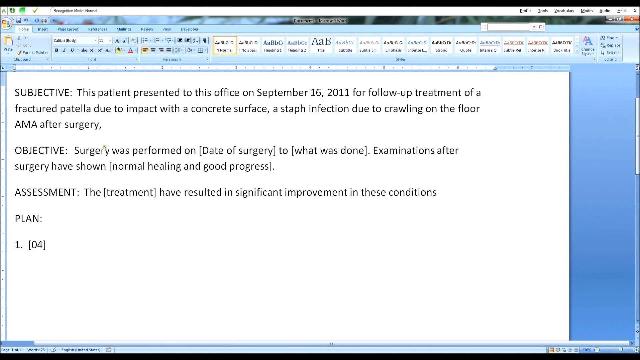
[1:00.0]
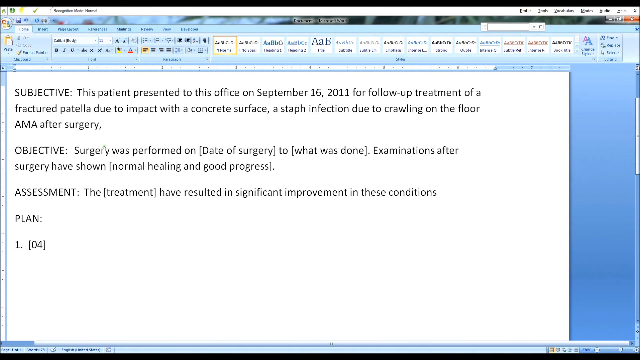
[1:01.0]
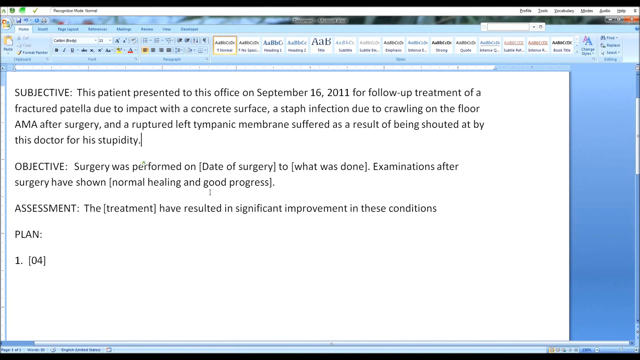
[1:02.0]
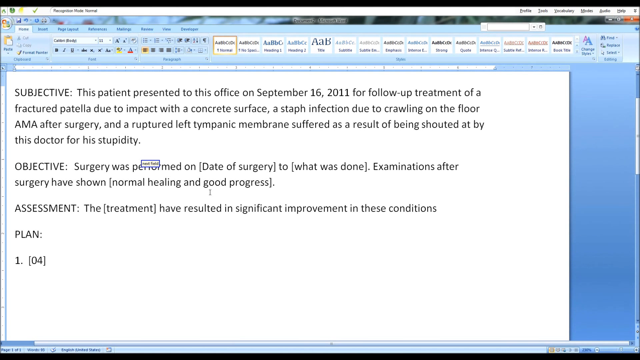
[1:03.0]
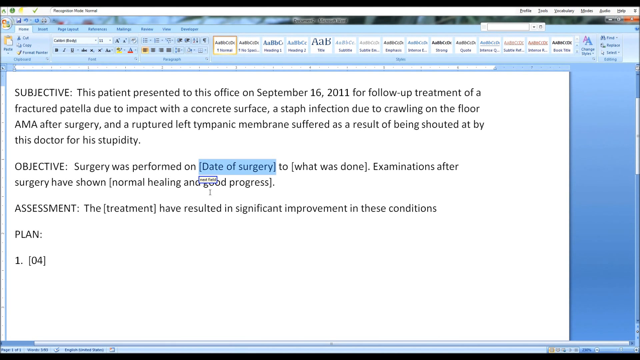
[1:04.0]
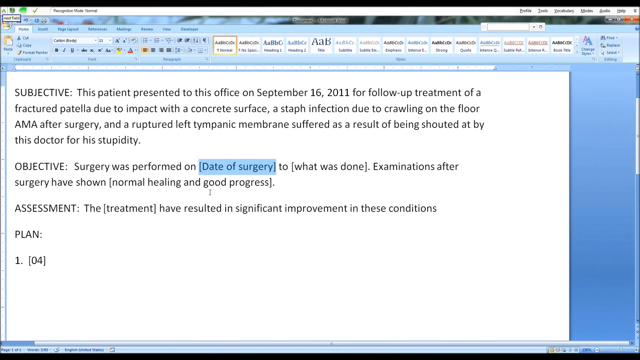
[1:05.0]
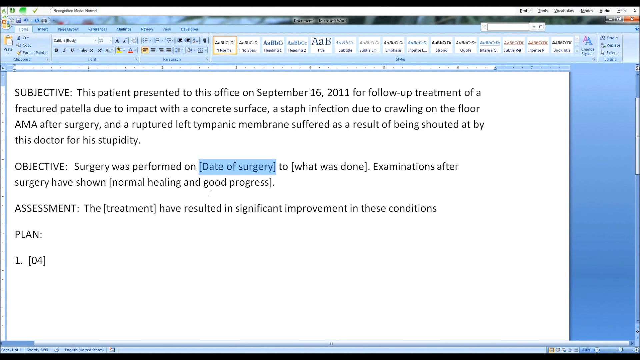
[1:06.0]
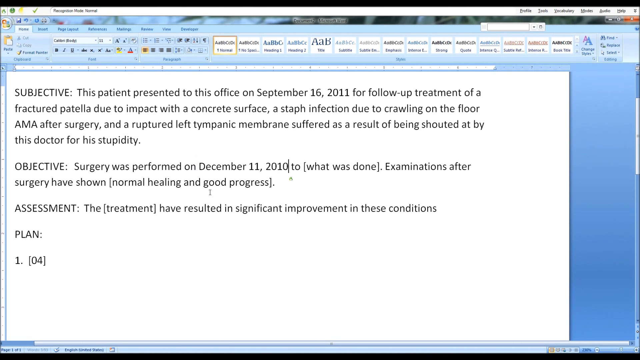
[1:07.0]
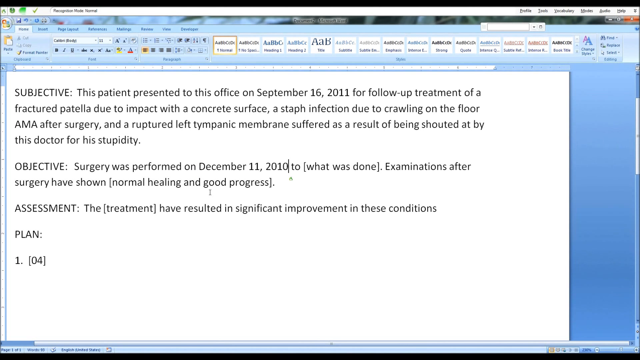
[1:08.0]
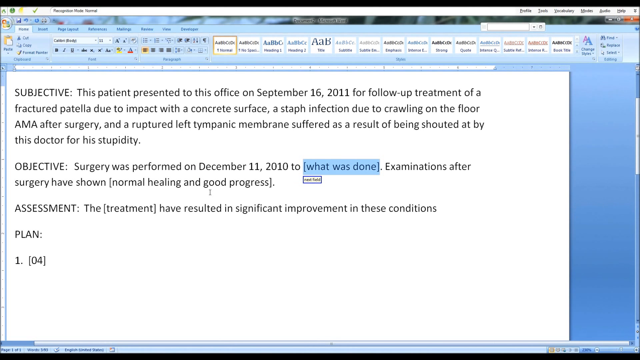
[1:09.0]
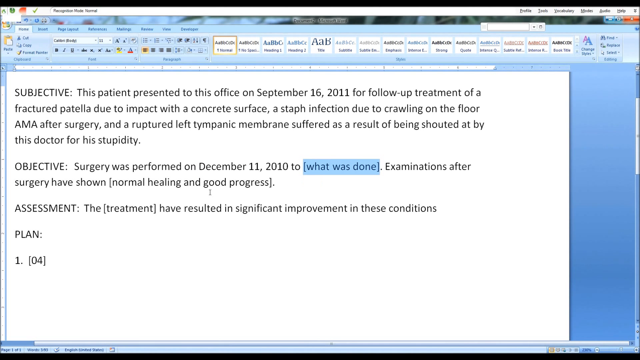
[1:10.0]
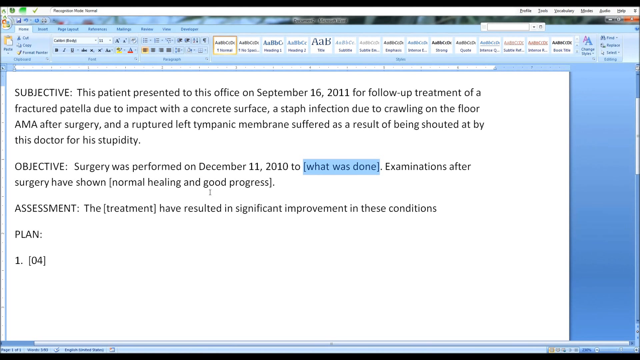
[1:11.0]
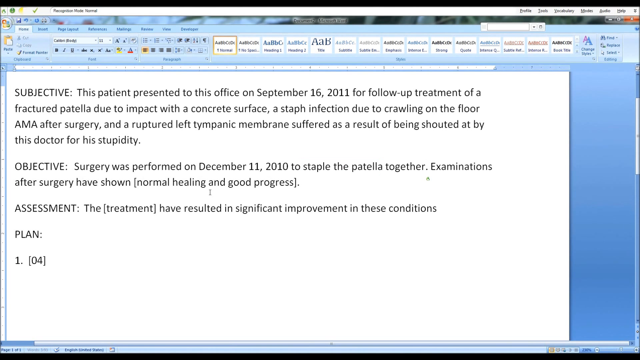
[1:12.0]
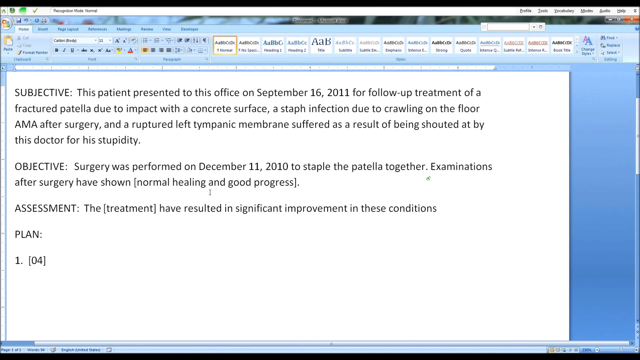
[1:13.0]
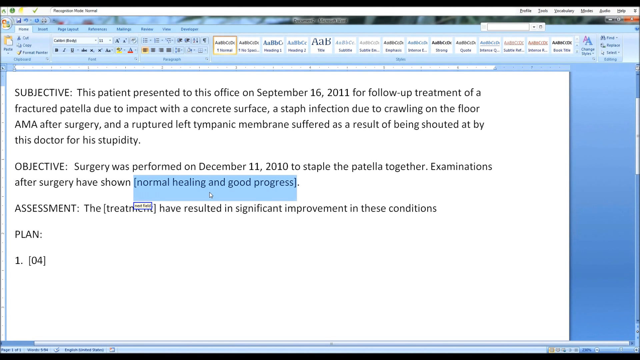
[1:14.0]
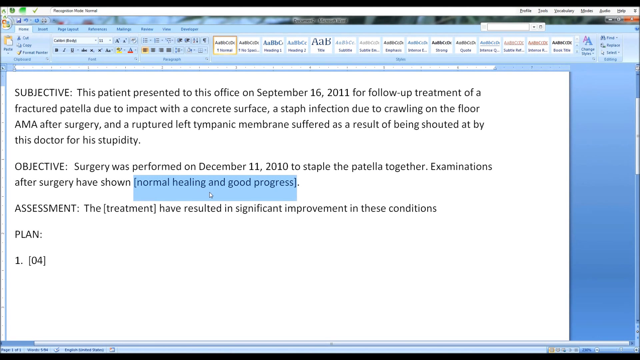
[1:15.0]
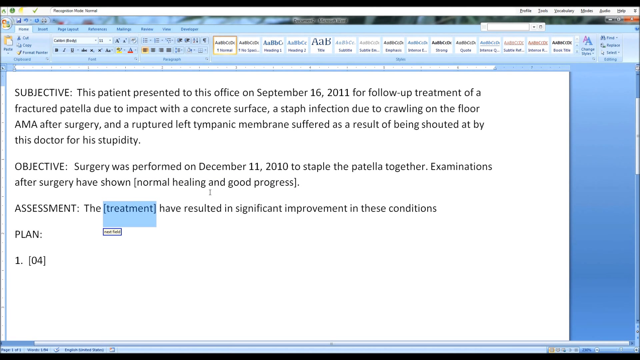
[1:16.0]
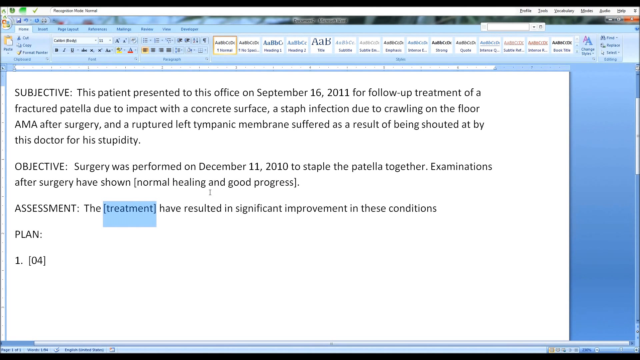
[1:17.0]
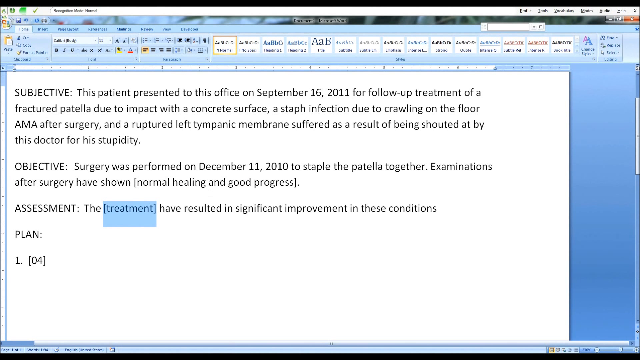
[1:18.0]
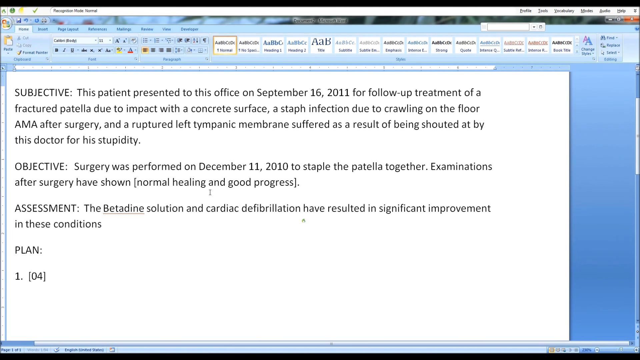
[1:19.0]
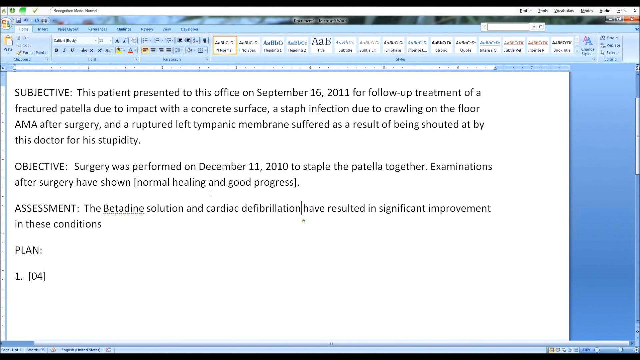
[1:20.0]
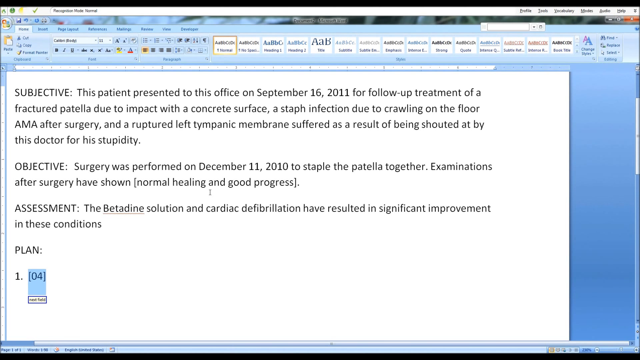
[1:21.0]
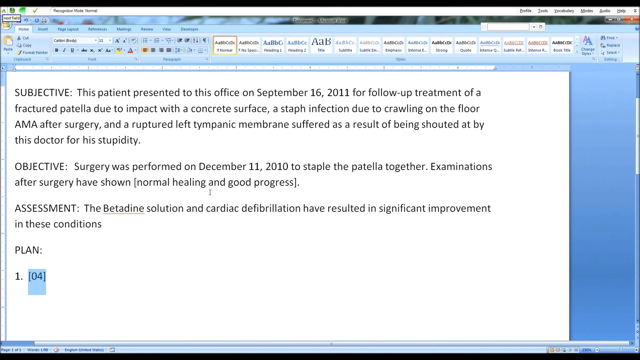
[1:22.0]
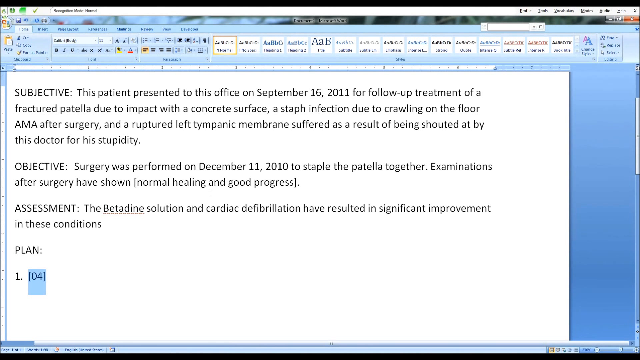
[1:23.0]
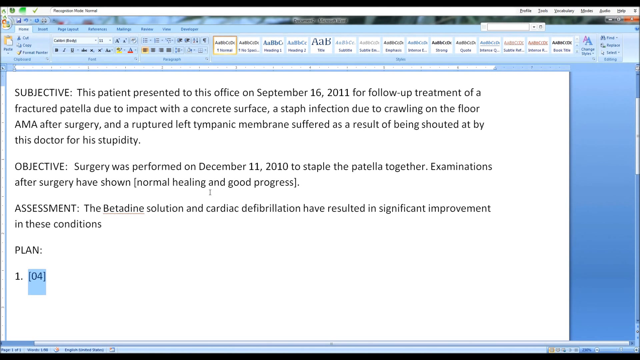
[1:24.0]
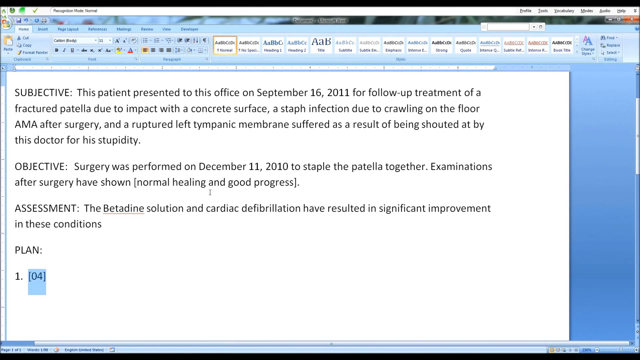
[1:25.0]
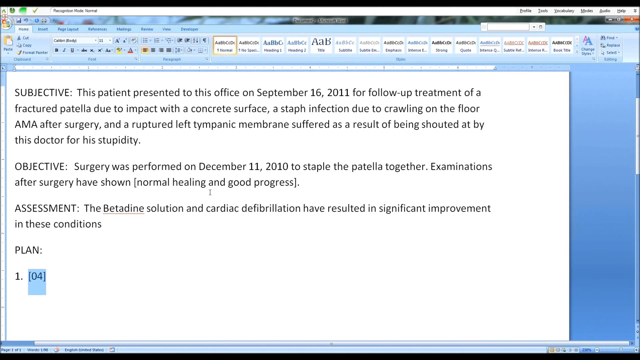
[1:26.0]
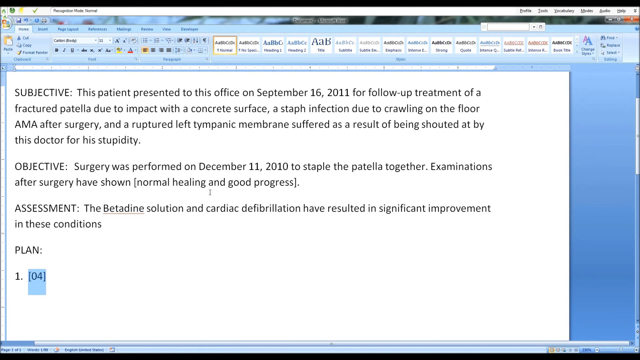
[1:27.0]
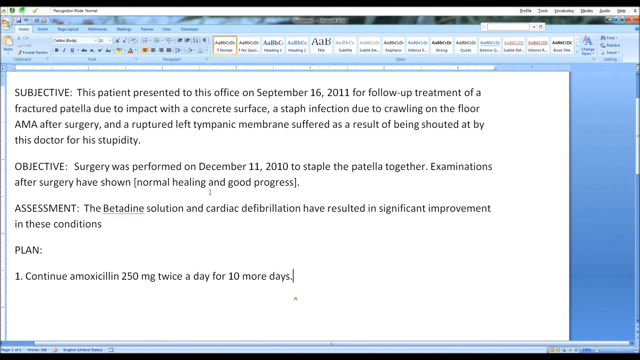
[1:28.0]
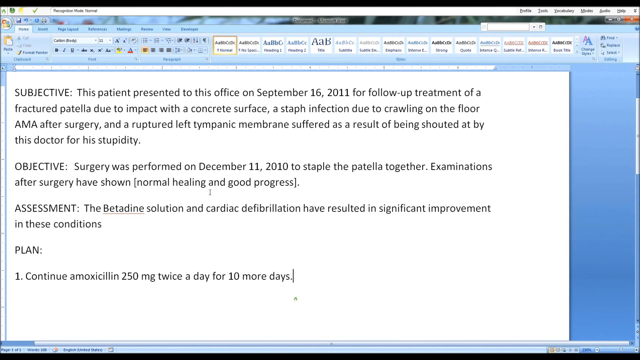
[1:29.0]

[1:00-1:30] A doctor or other medical professional enters details into a medical program on a computer, in what looks like Microsoft Word. Only the screen is shown, not the man, though he is presumably the one entering the data. First, text is added on the line under Subjective: a line about a ruptured left tympanic membrane, reading in part "suffered as a result of being shouted at by this doctor for his stupidity". The cursor then moves down to highlight "date of surgery" in blue; typed text flashes on the screen and is replaced by "December 11, 2010". Next, "what was done" is highlighted in blue and replaced with "staple the patella together". The cursor moves down to highlight "normal healing and good progress" in light blue, but this section is left unchanged. The cursor then moves down to highlight the word "treatment", which is replaced by "the betadine solution and cardiac defibrillation have resulted in significant improvement in these conditions". Finally, below the Plan section, the text "04" is highlighted in blue and replaced by text reading "continue amoxicillin 250 mg twice a day for 10 mornings".